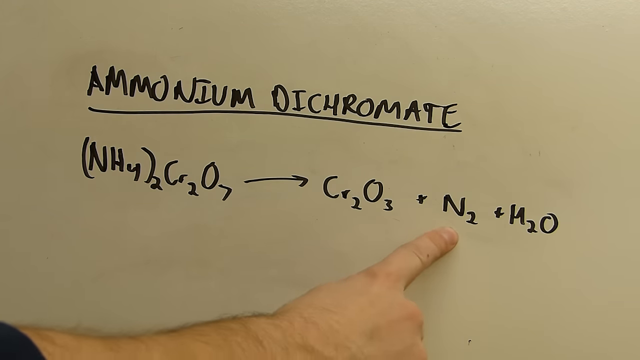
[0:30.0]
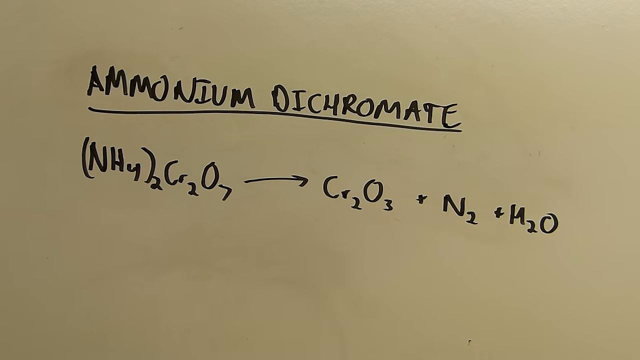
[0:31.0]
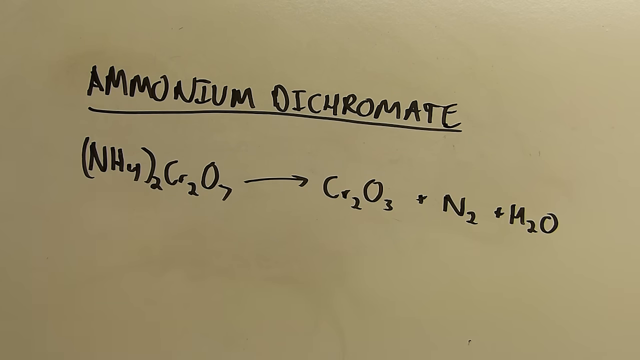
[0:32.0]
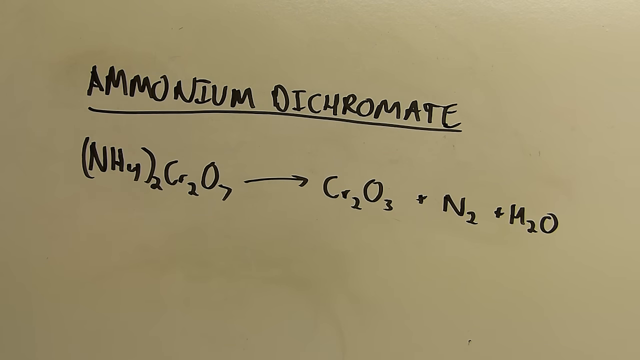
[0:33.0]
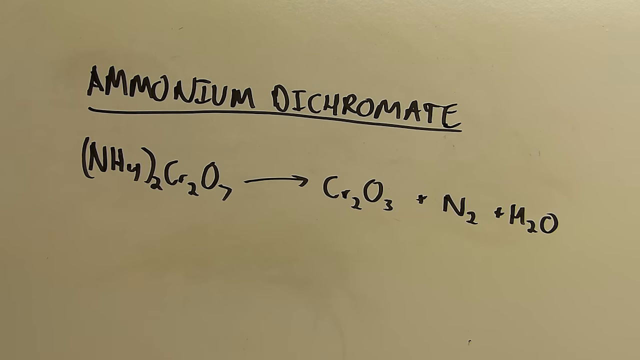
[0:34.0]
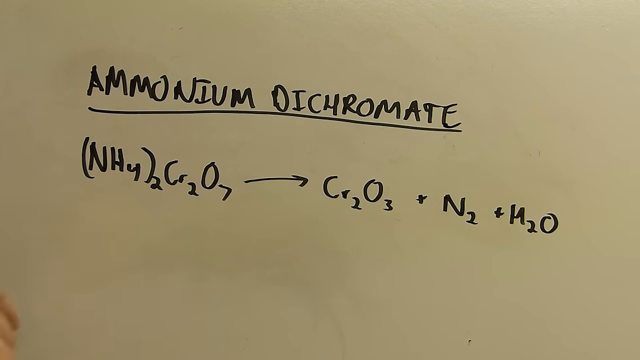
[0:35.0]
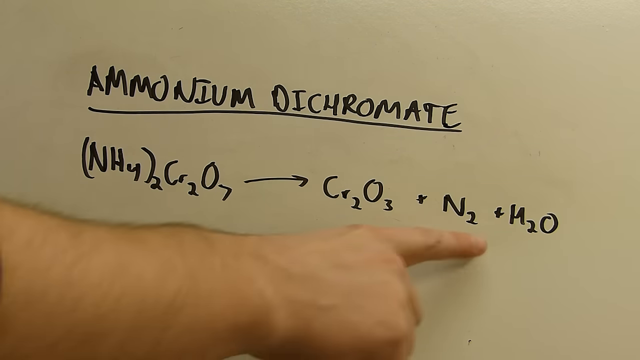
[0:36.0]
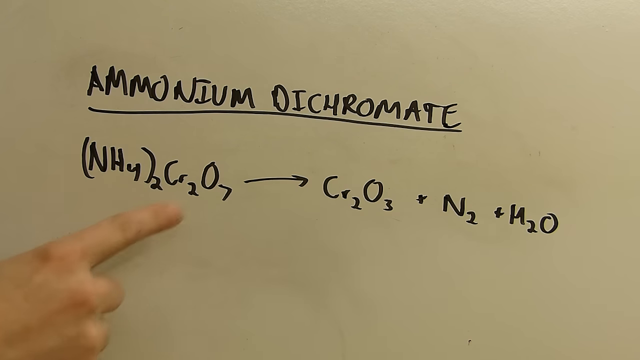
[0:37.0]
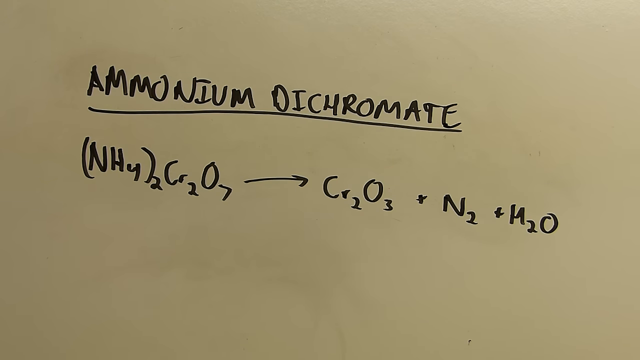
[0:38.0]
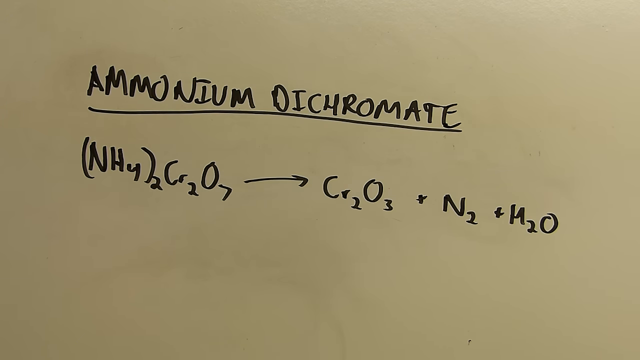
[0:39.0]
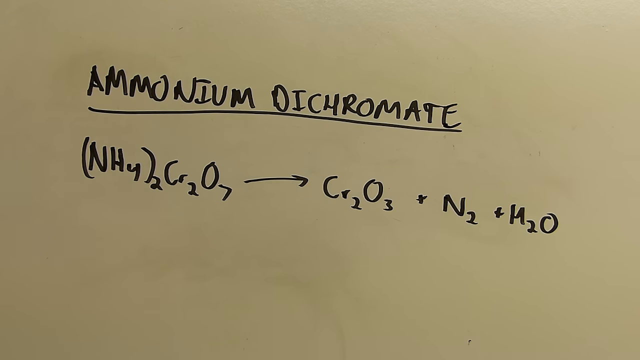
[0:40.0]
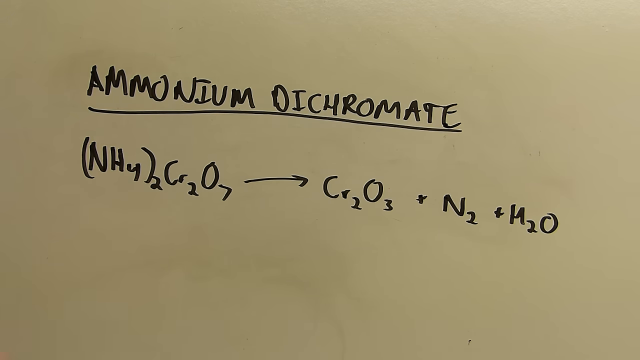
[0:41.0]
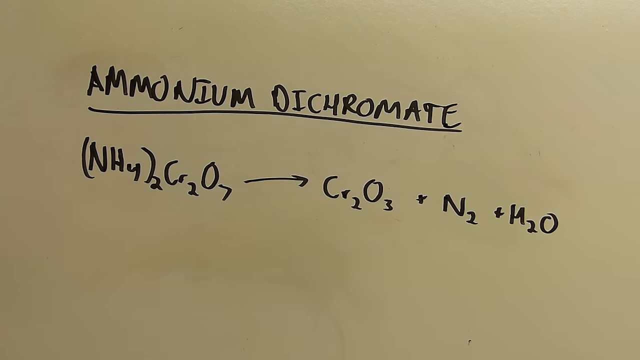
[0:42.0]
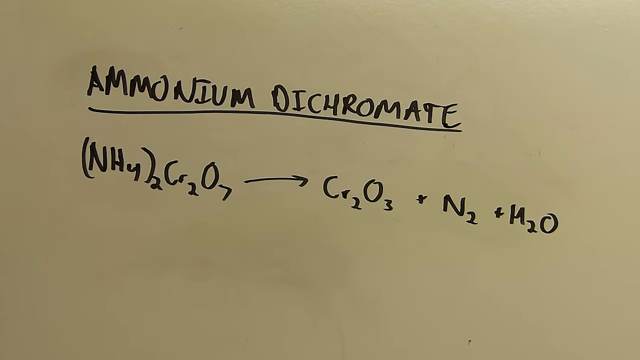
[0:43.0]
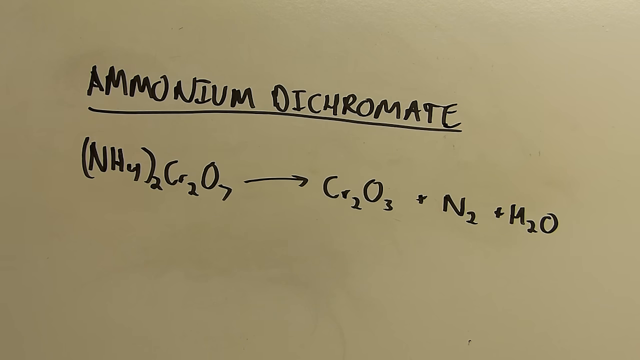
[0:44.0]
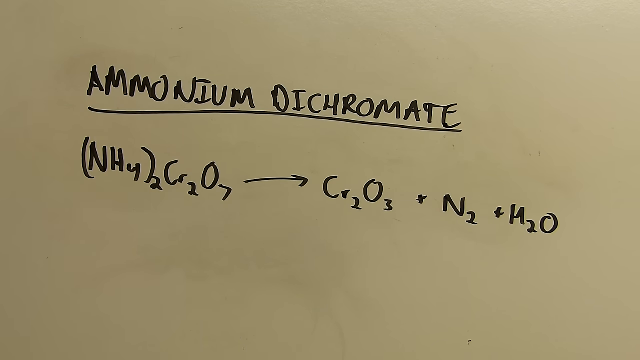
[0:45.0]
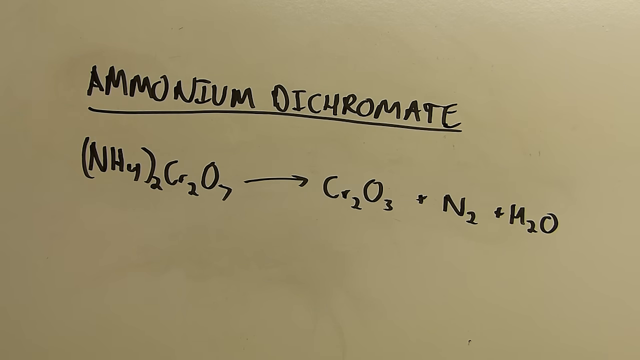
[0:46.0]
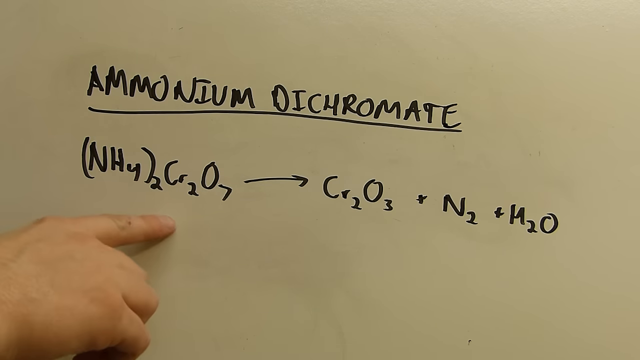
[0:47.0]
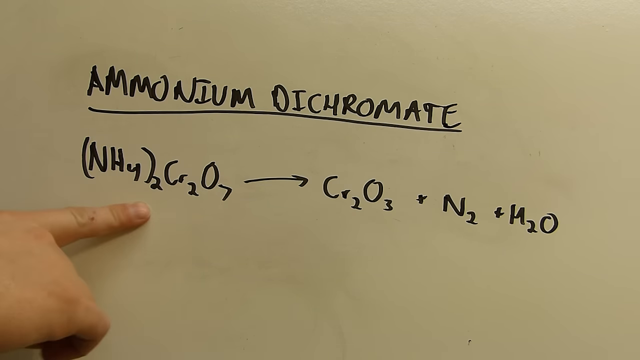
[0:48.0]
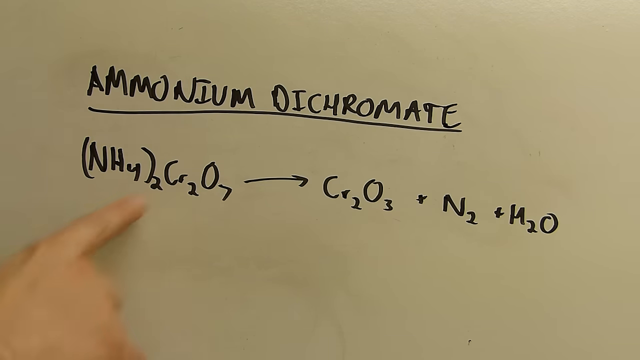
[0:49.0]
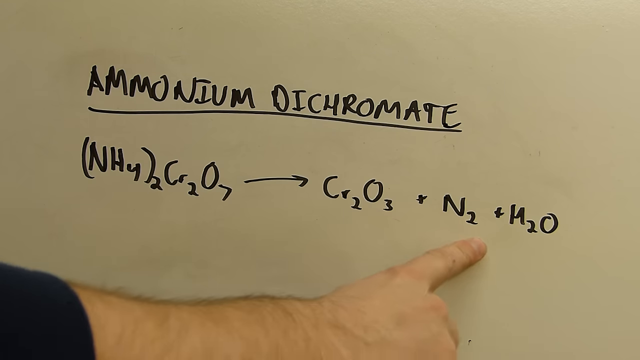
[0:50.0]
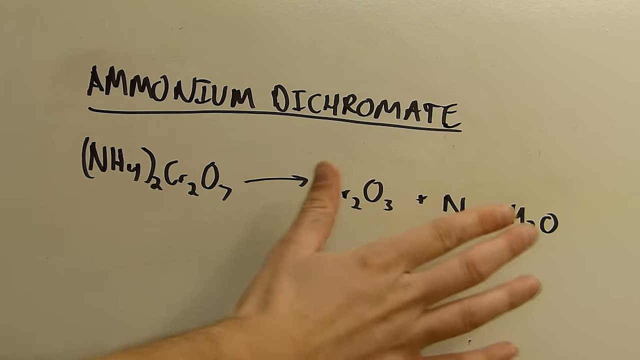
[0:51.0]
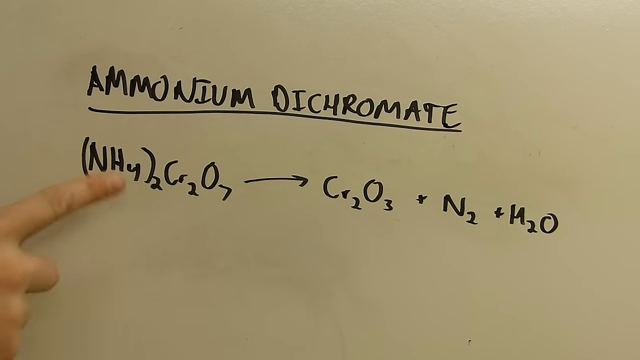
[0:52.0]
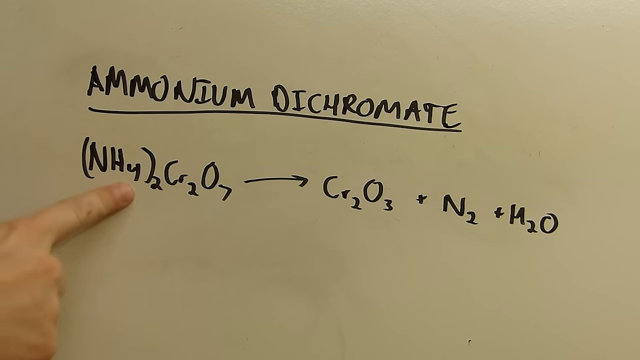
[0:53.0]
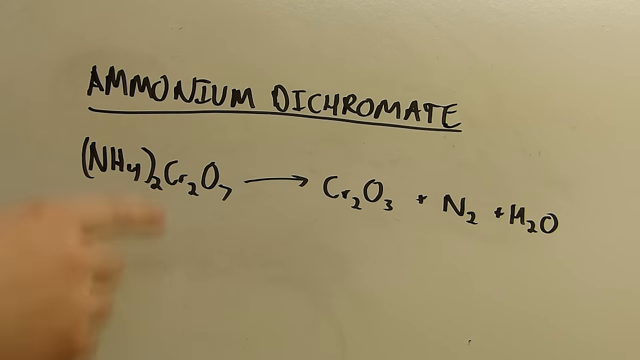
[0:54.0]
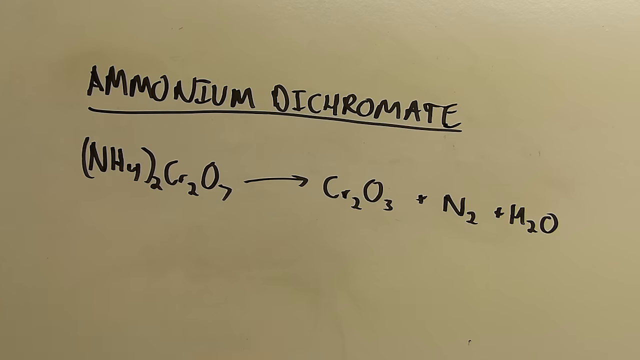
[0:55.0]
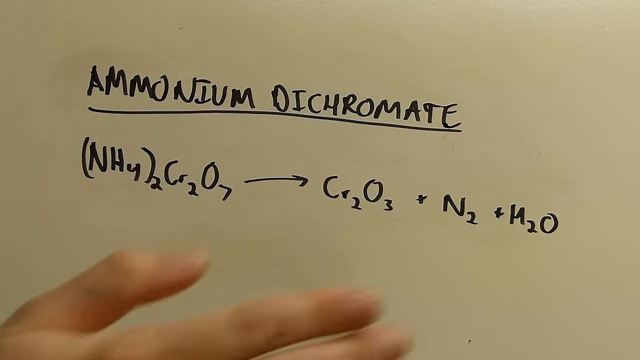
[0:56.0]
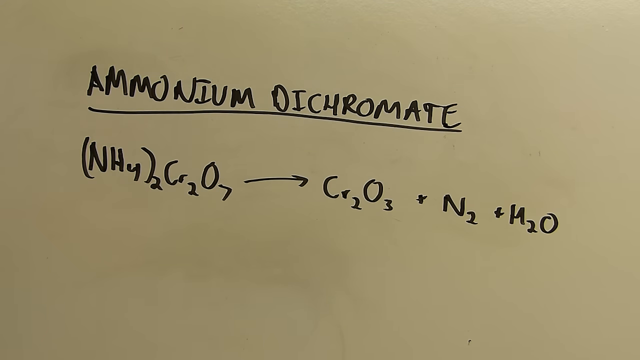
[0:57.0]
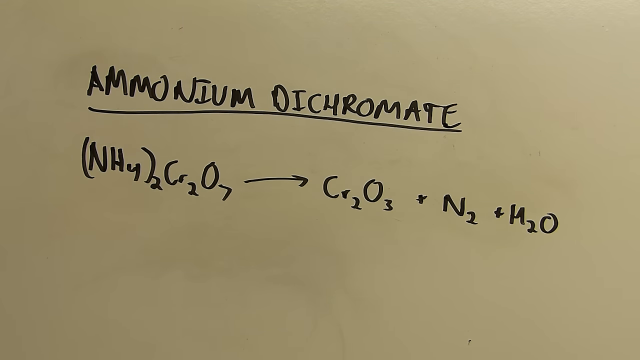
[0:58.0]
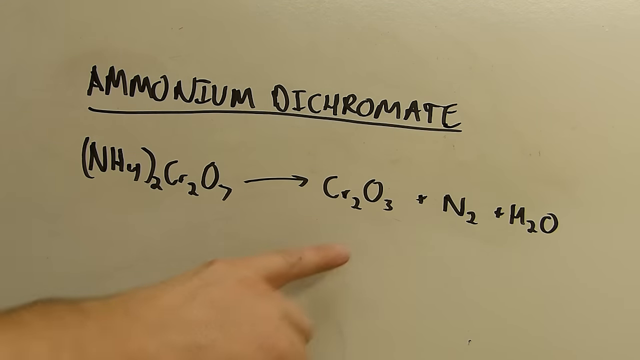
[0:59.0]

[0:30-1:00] The white board still shows "ammonium dichromate" underlined, with the formula beneath it. The person points to N2 at the end of the formula, on the other side of the arrow, then to the H2, the water, then to N2 H2 again, and the hand seems to move toward the O7 before the arrow. He then points to the Cr2 before the arrow, then to the NH4 in parentheses, apparently the ammonium, then to the dichromate section, and finally ends pointing at the N2.